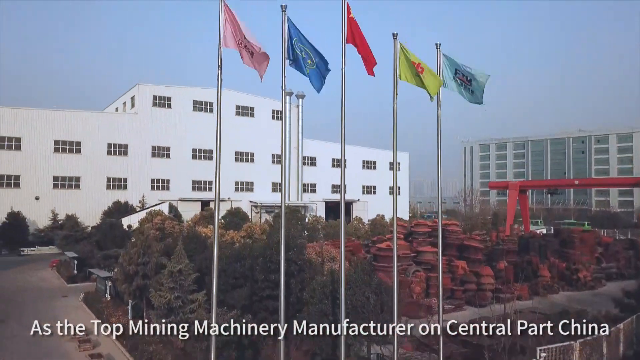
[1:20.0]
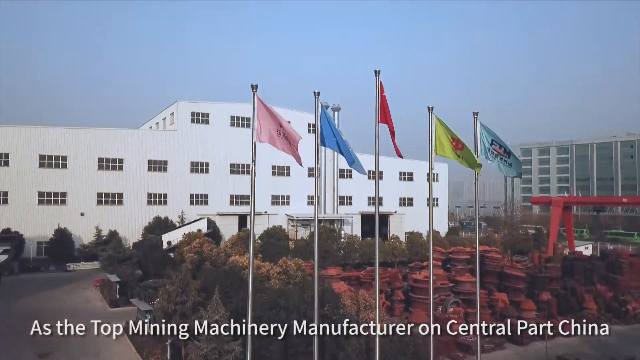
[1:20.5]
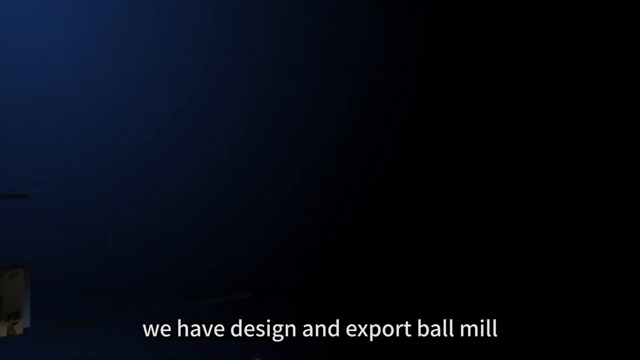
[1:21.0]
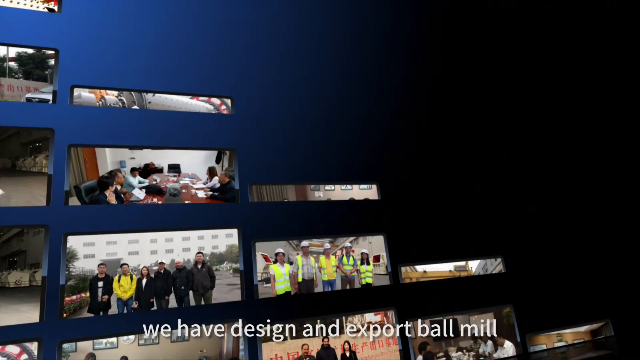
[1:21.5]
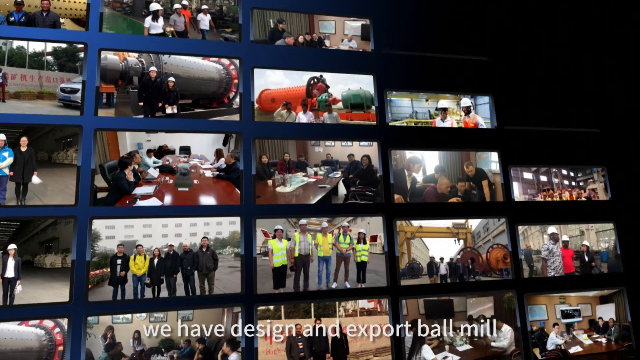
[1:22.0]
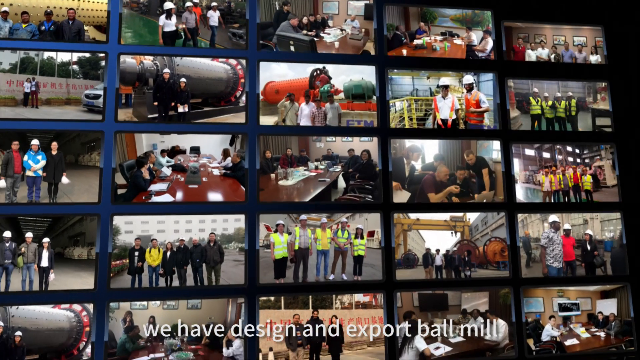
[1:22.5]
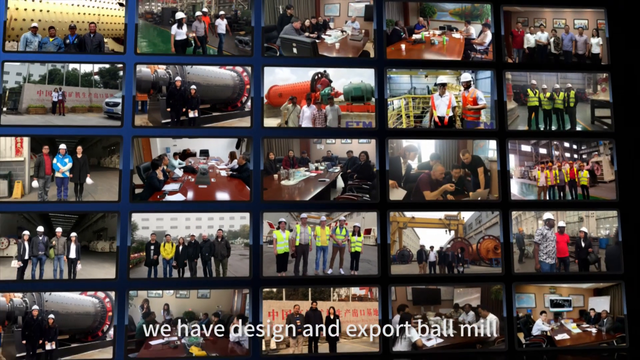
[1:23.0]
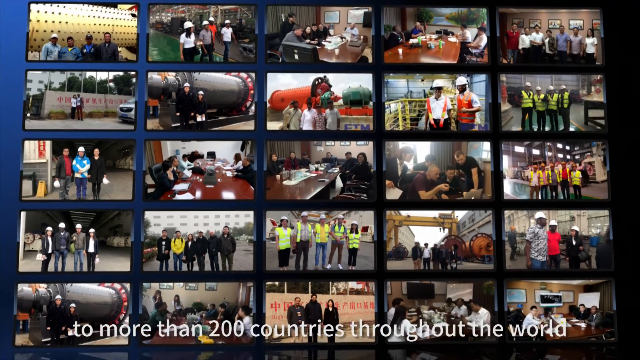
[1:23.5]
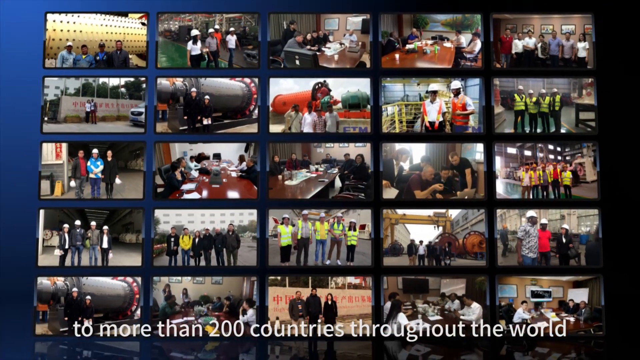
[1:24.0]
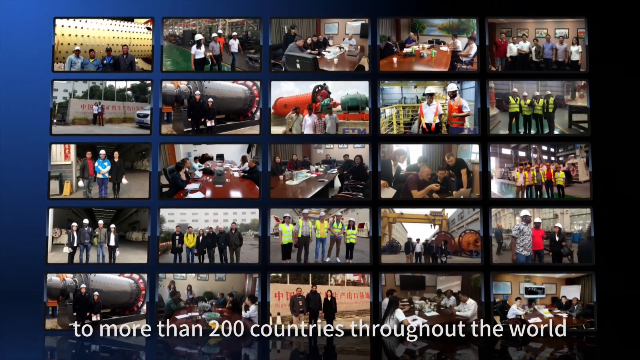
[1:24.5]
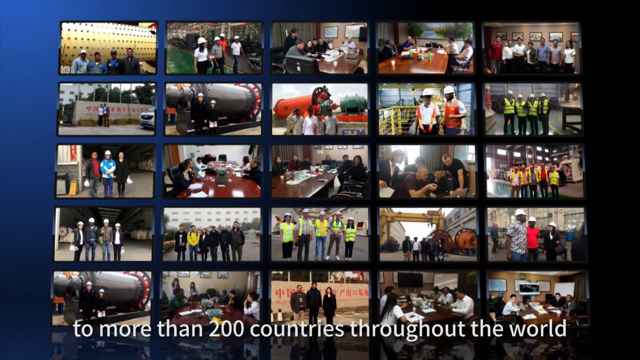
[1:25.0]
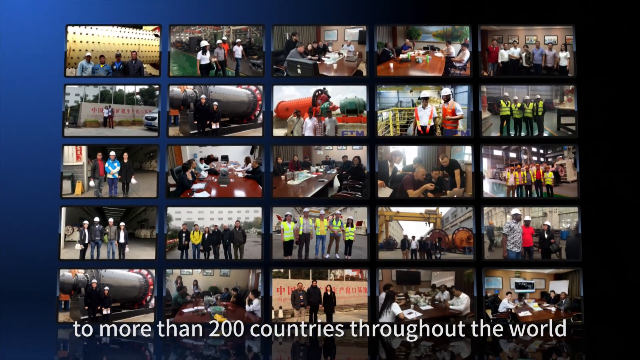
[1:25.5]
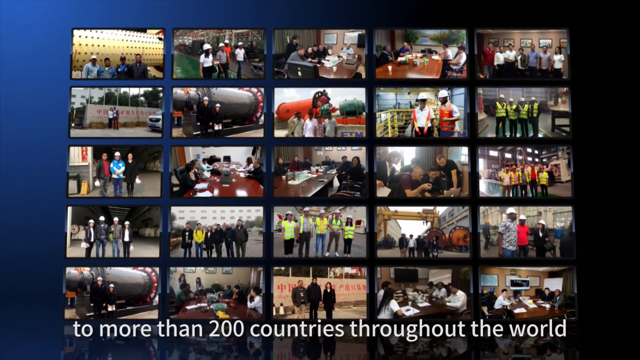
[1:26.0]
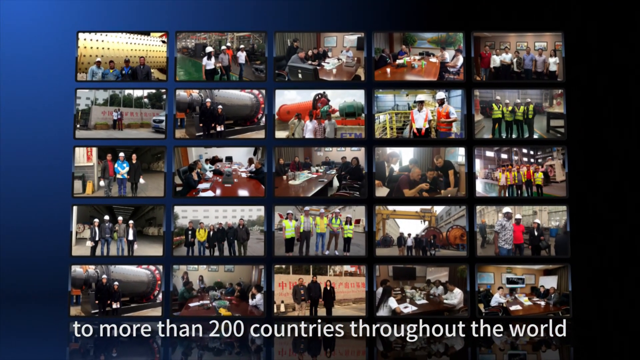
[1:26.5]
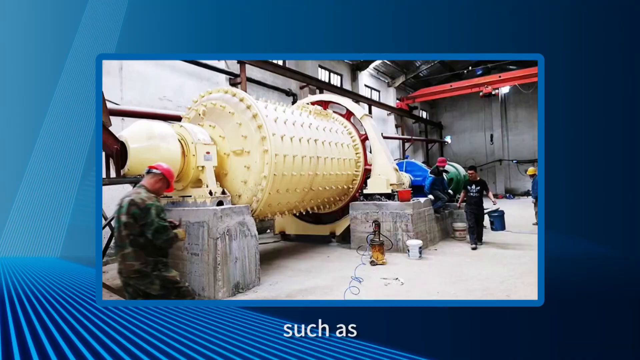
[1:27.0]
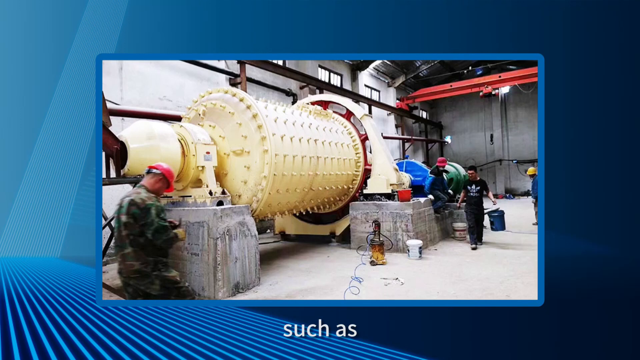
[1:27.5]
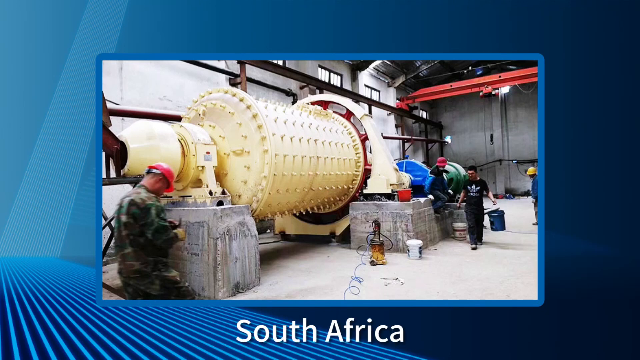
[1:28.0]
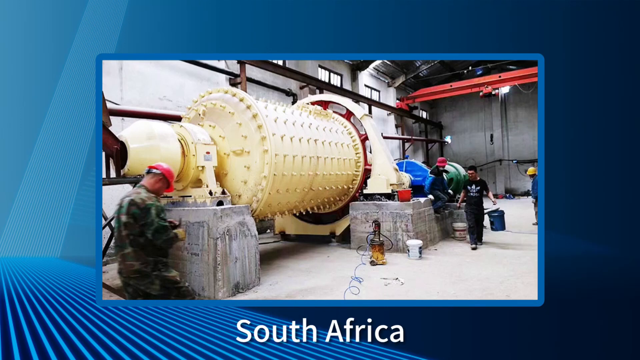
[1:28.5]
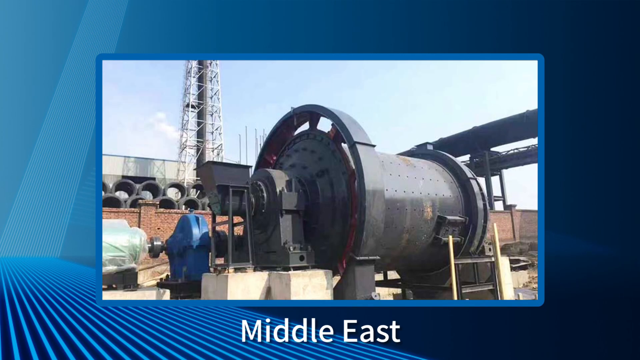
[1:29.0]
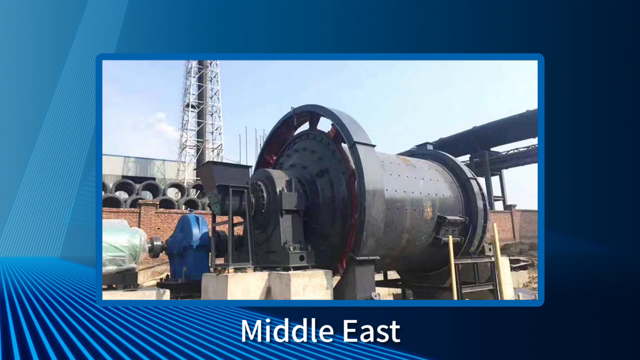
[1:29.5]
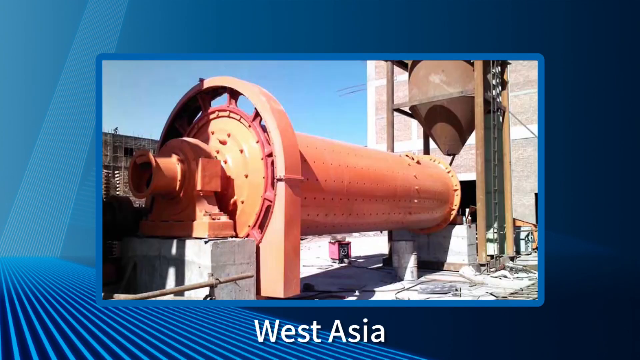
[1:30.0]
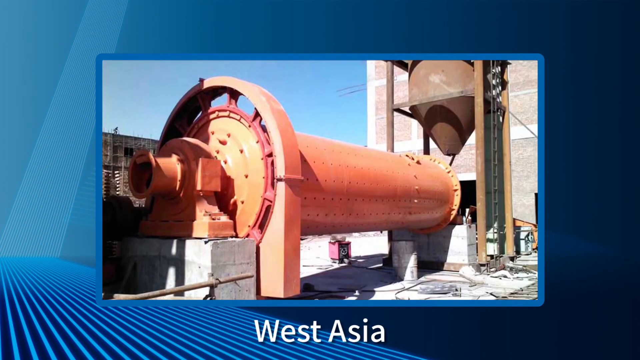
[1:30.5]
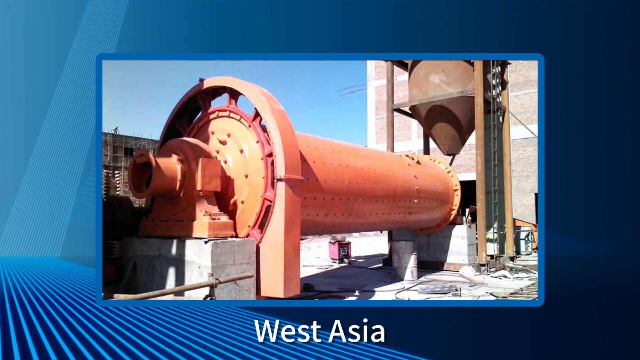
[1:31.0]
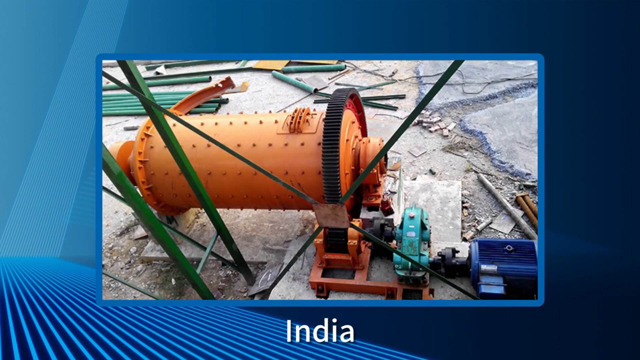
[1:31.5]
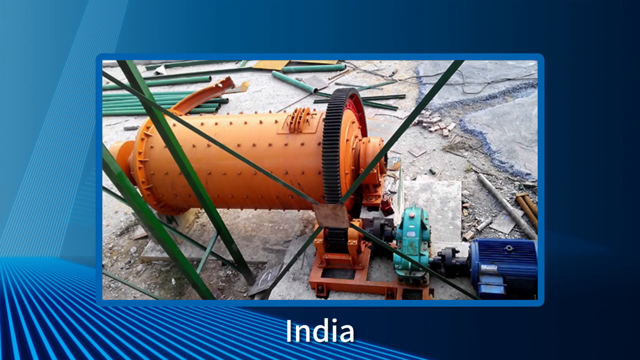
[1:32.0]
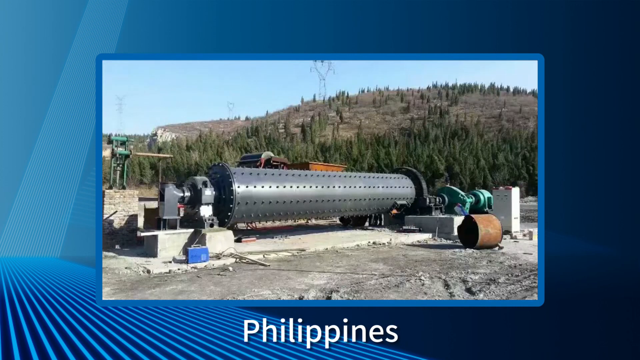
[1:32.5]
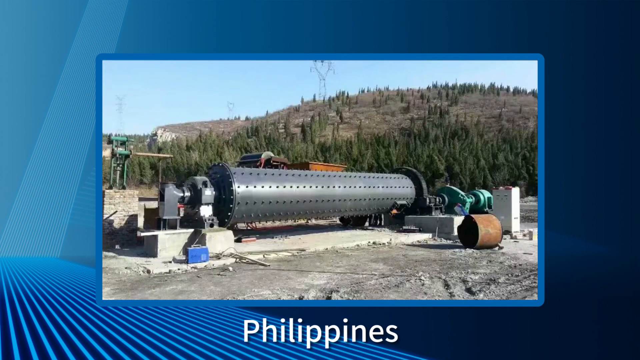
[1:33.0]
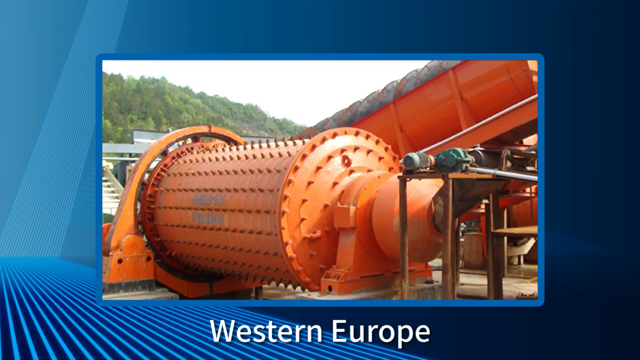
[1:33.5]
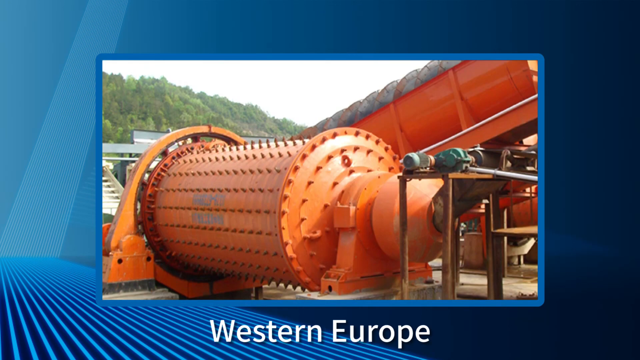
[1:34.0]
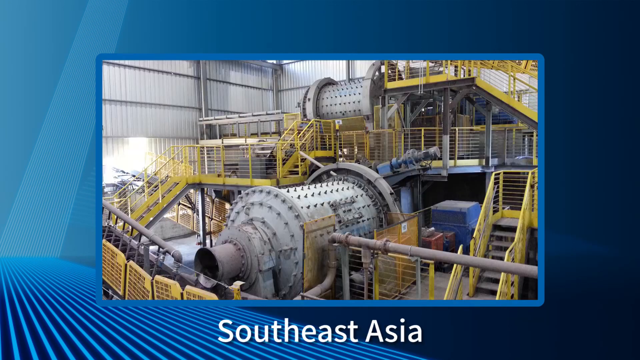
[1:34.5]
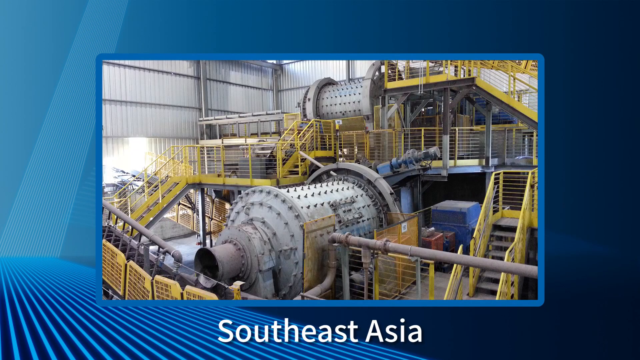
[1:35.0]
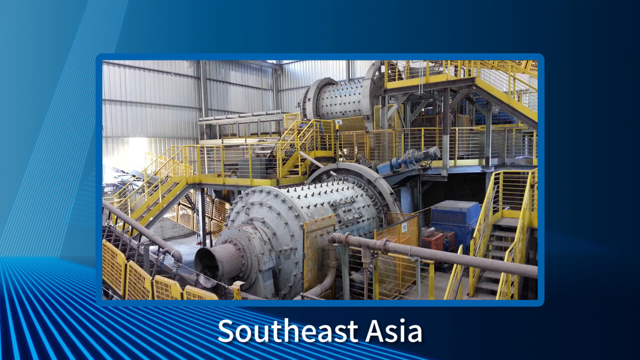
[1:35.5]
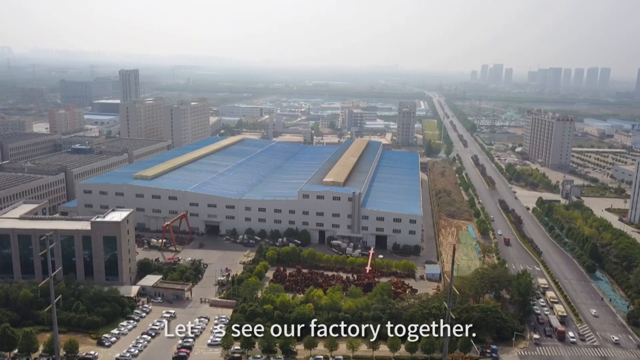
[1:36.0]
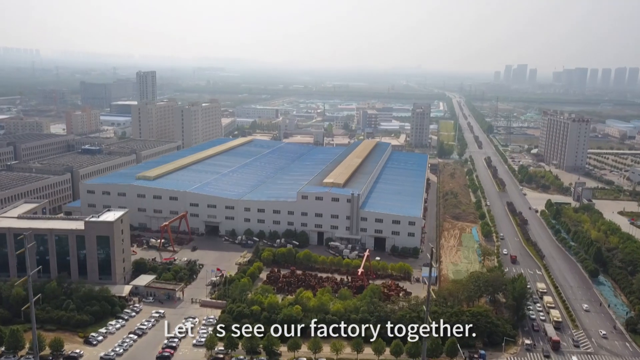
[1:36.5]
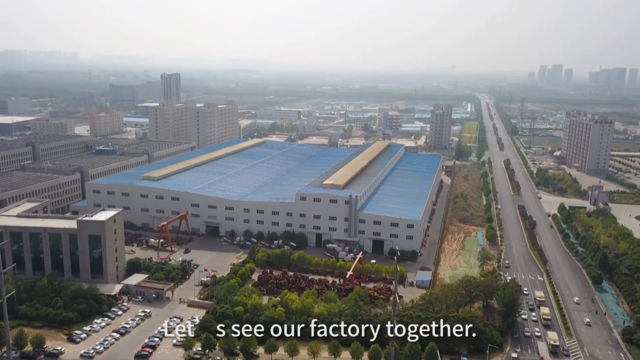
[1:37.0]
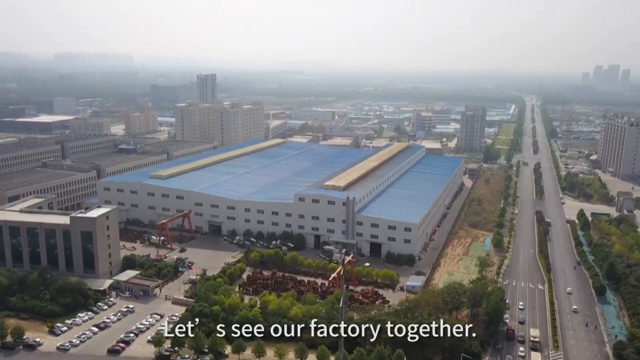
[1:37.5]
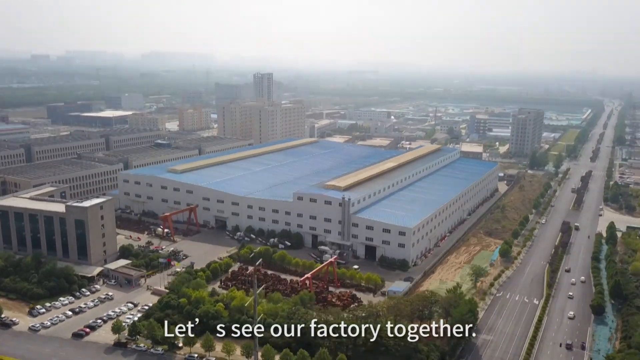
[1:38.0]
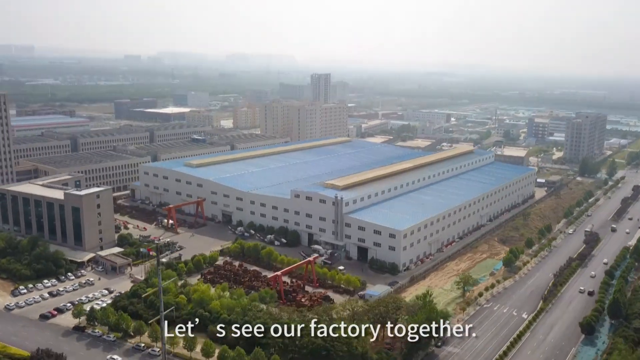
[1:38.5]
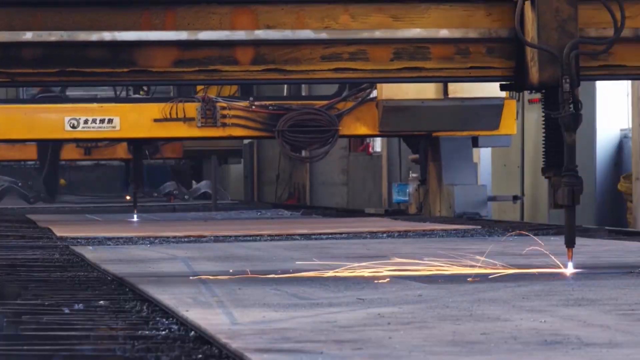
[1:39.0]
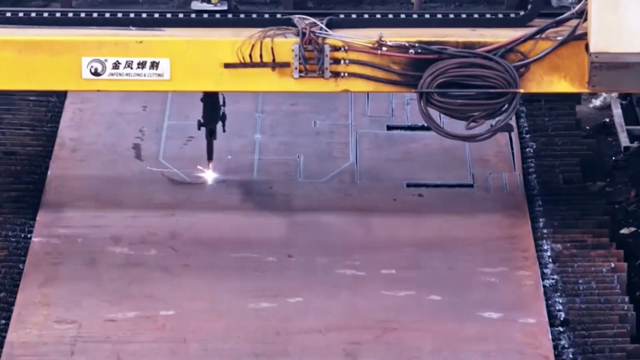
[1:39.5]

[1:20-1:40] The video of the factory and its stone slabs from the outside continues. It is then replaced by a screen filled with a rectangular grid of video clips or stills, almost 5 by 5, showing the outside of the factory, ball mills, the insides of the factory, and what look like photos taken with customers, perhaps industrial customers or large clients, with many people in high-vis vests. The subtitles refer to the company having designed and exported ball mills to more than 200 countries. A slideshow follows, showing a different ball mill in each image with a different region named at the bottom: South Africa, the Middle East, West Asia, India, the Philippines, Western Europe, and Southeast Asia. Then comes an aerial, drone-like shot of a massive factory next to a highway, followed by clips of the factory's interior with ball mills being created.